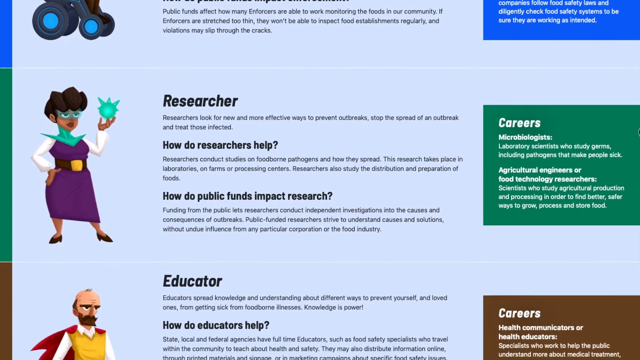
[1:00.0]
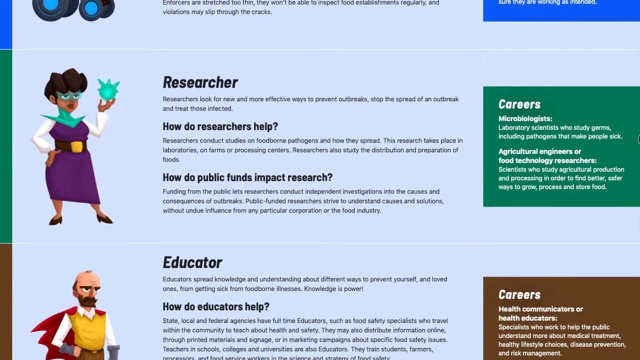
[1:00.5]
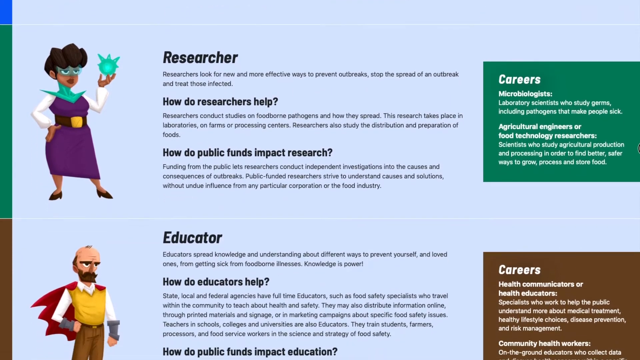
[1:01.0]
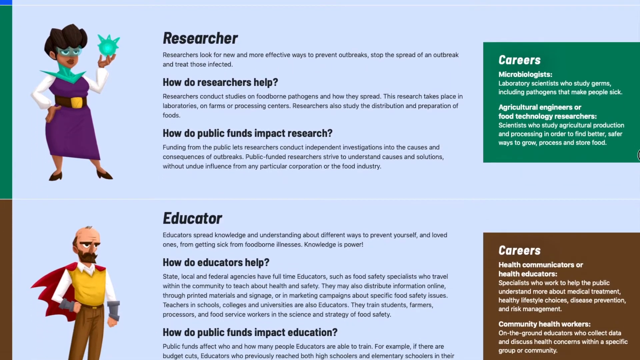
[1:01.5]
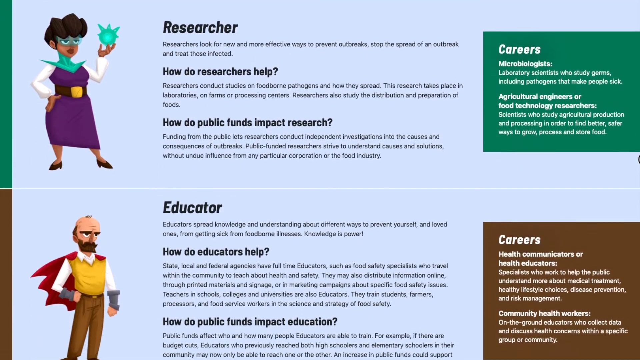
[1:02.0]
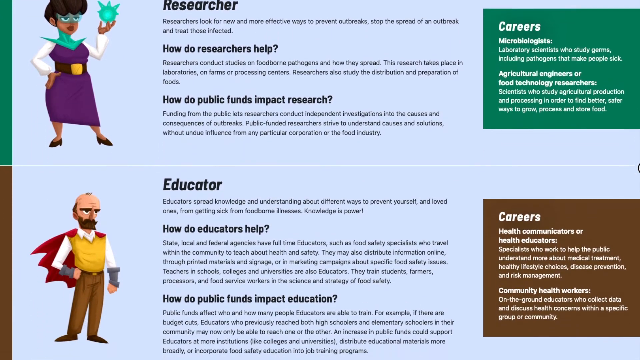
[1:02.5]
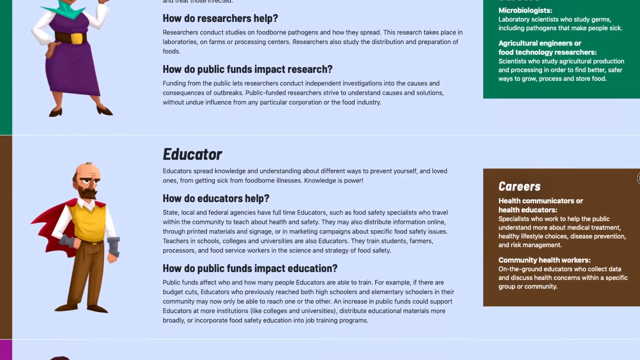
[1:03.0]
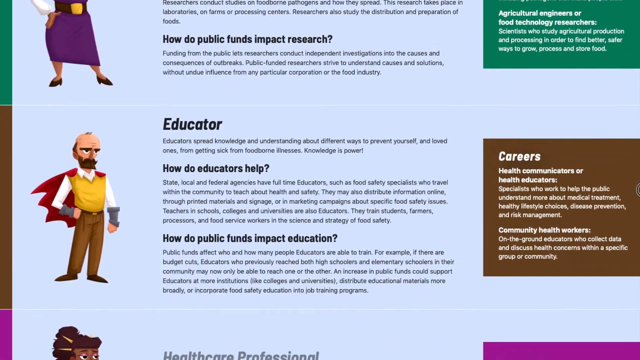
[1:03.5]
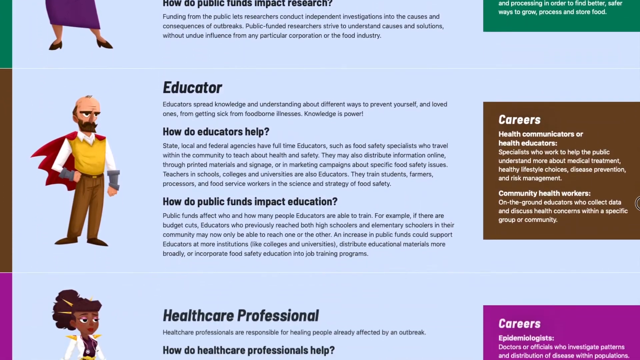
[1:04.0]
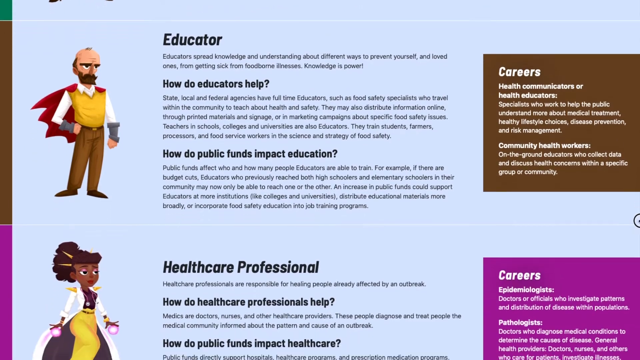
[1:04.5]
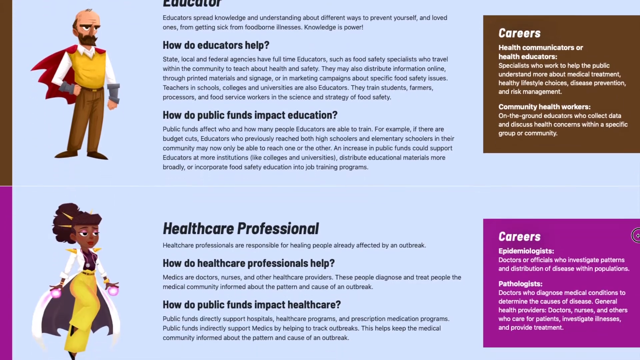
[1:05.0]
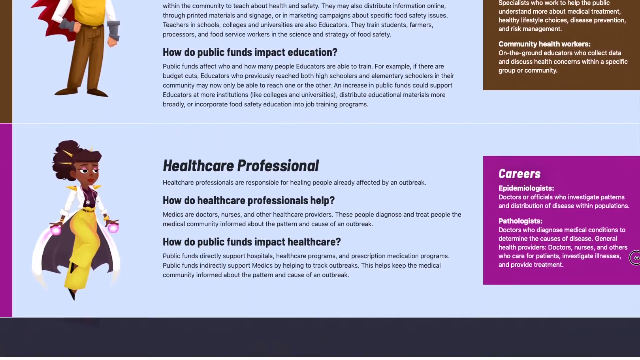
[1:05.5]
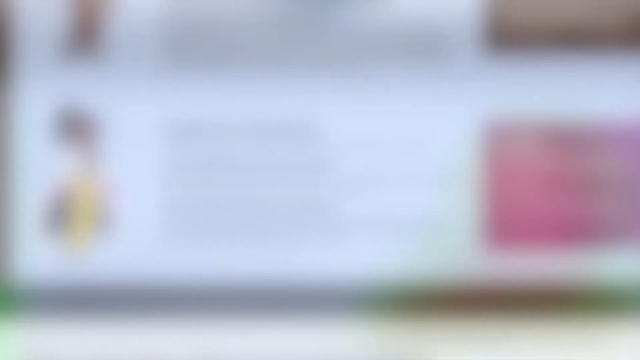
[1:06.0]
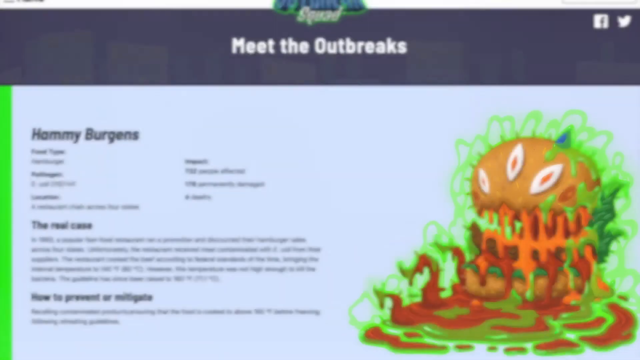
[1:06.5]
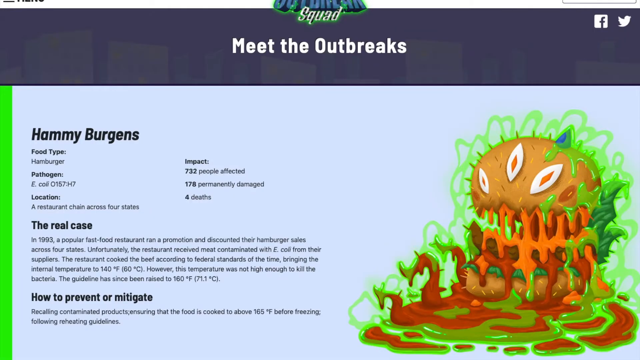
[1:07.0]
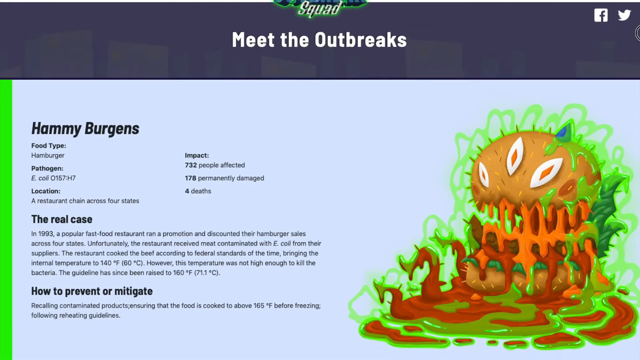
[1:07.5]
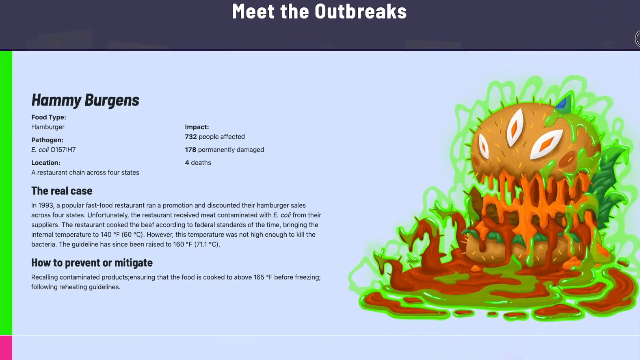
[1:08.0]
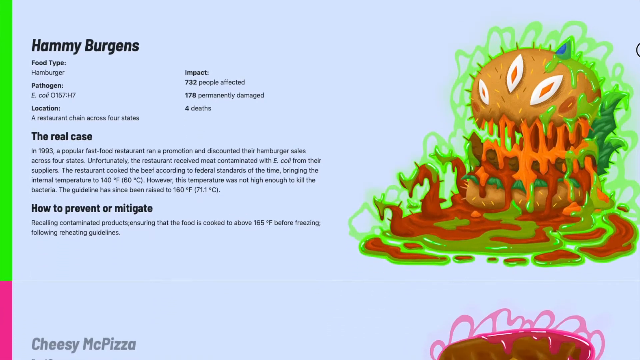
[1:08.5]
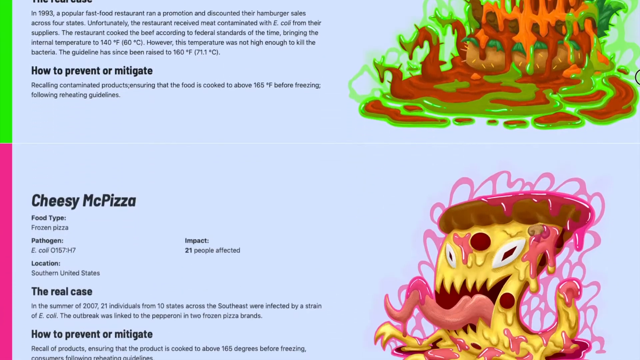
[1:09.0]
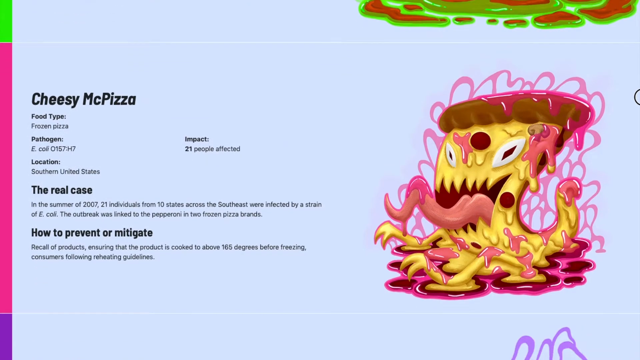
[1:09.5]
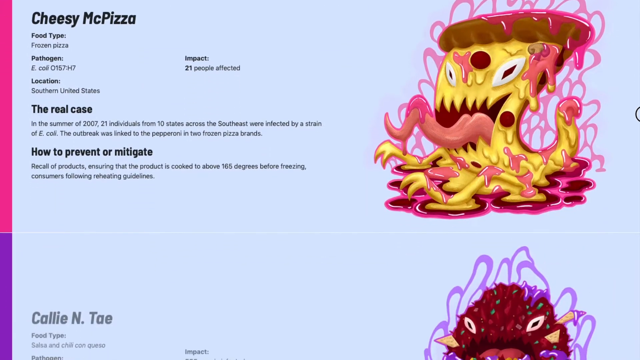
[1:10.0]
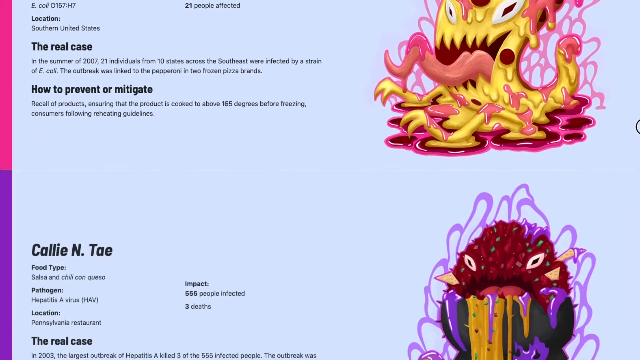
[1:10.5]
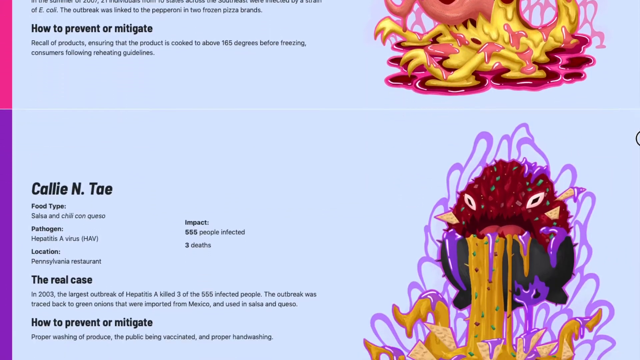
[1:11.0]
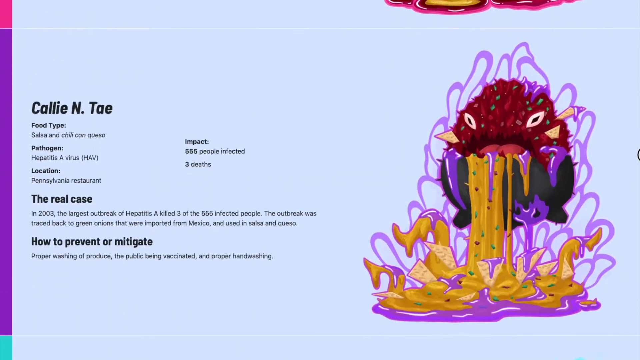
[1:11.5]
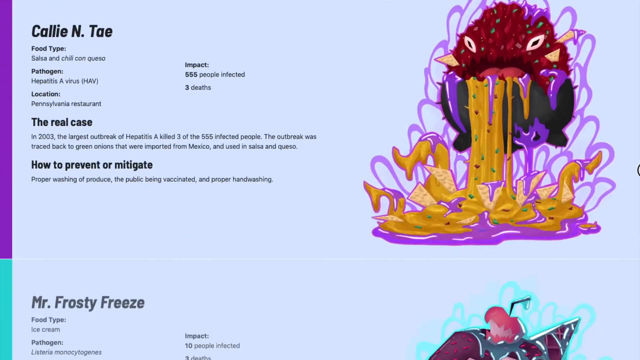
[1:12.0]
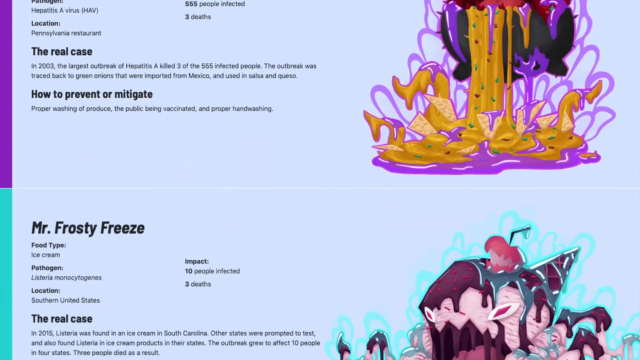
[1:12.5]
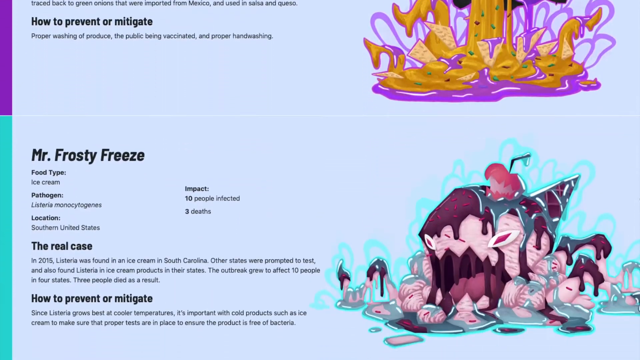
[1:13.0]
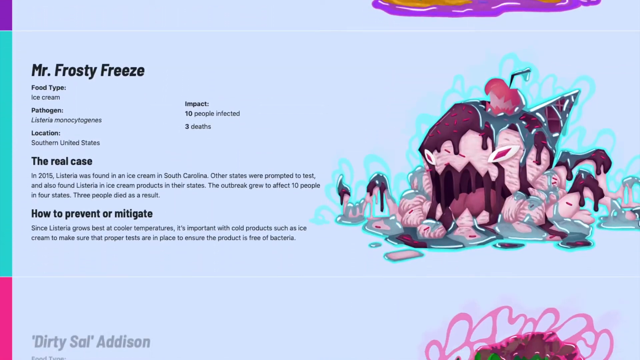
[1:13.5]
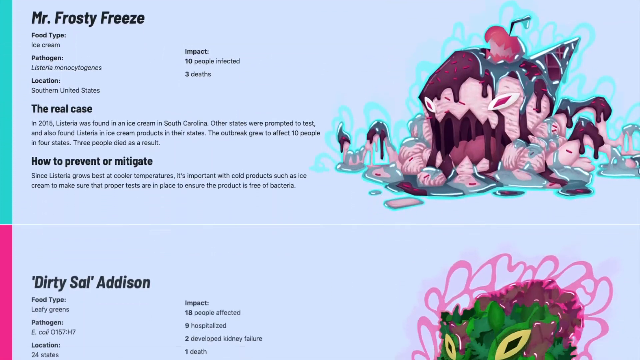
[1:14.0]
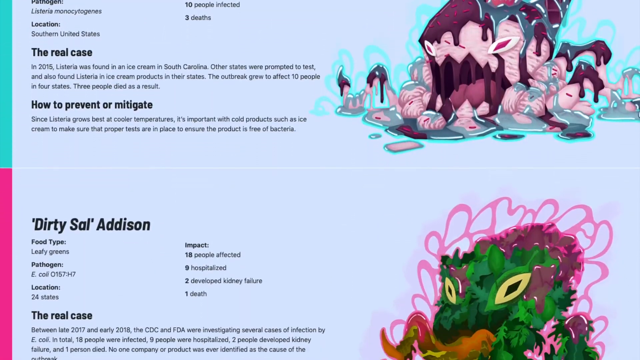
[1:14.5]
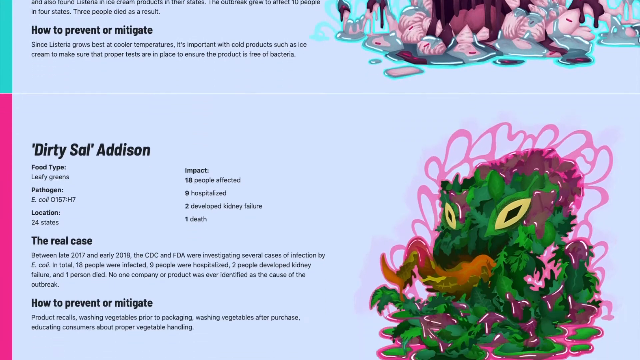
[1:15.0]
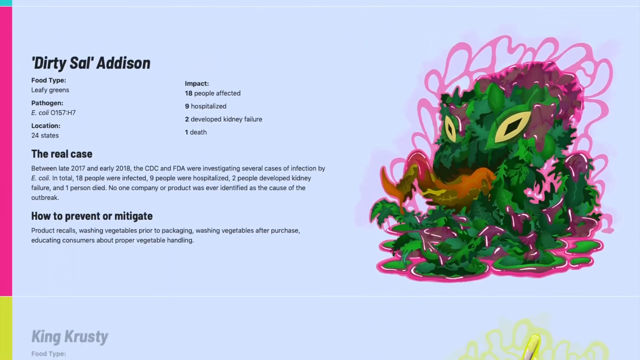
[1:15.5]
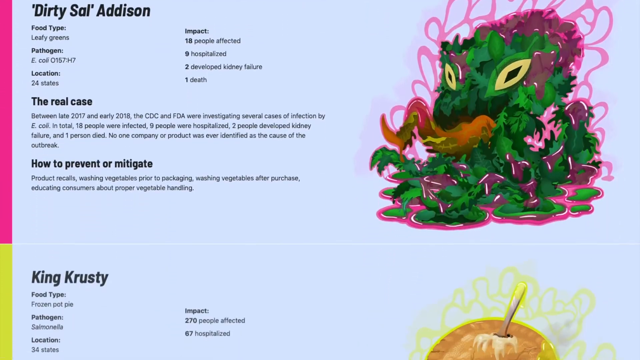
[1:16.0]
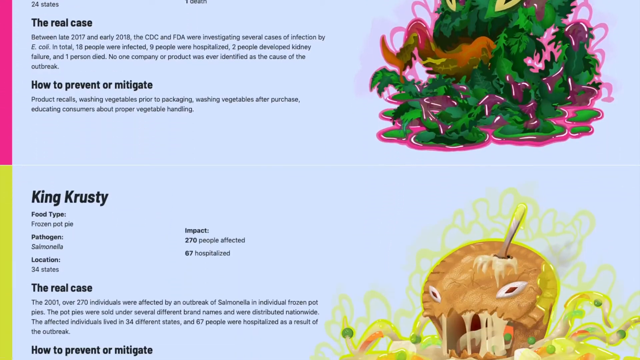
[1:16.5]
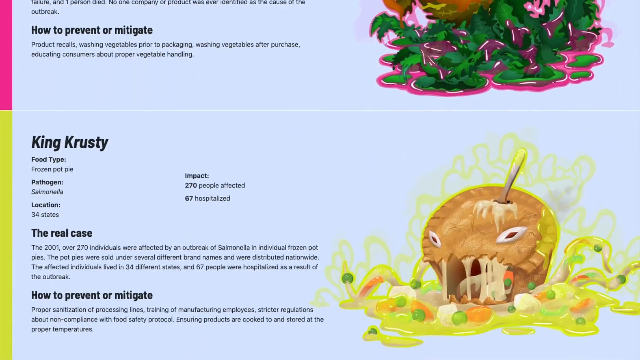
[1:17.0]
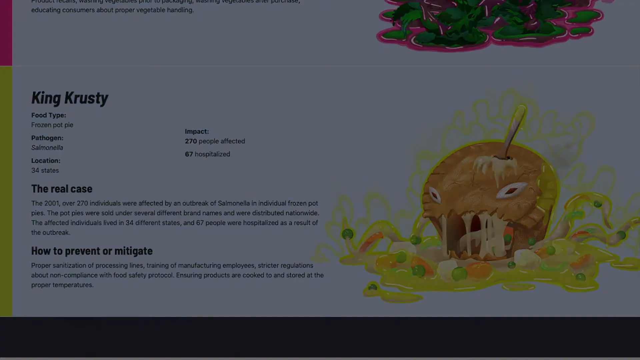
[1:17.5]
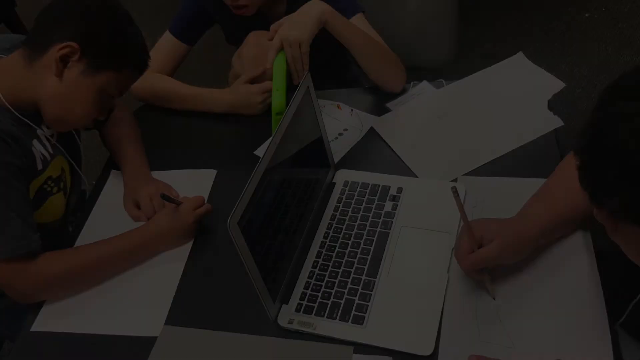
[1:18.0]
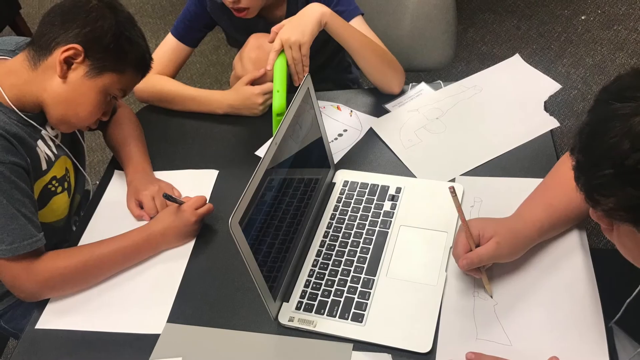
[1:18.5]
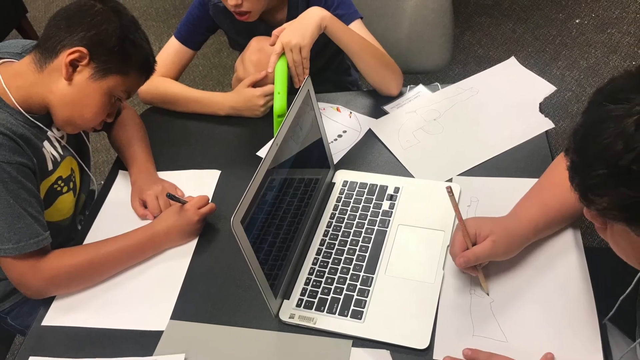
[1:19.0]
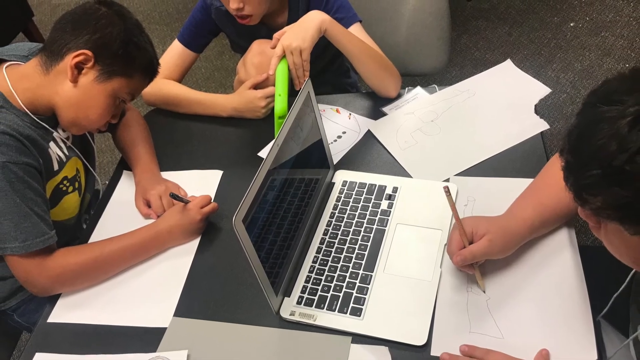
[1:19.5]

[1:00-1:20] A scrolling screen starts with the enforcer at the top: a picture of him on the left-hand side of the page, a careers graphic on the right-hand side, and between them the text "Enforcer. Enforcers prevent foodborne illness from spreading by stopping you from eating contaminated foods." Details follow on how enforcers help and how public funds impact enforcement. The screen scrolls and lands on the researcher, who wears green crystal accessory-type items and a purple dress with a black belt with a shiny gold buckle. The text says researchers "look for new and more effective ways to prevent outbreaks", stop the spread of an outbreak and treat those infected, and also shows how they help and how public funds impact research. Next is the third superhero, the educator, with text explaining how educators spread knowledge and understanding about different ways to prevent yourself and loved ones from getting sick from food-borne illnesses, and "Knowledge is power". The graphic continues with how educators help and how public funds impact education, followed by the health care professional with similar details relating to him.